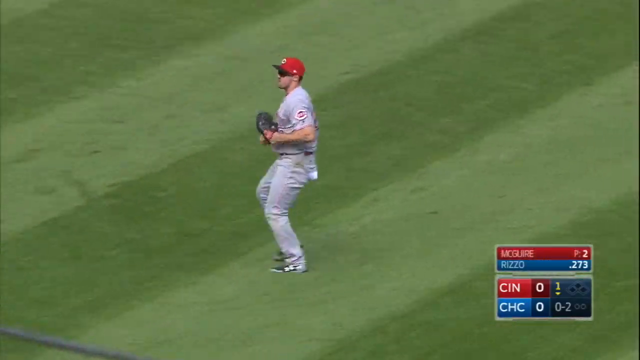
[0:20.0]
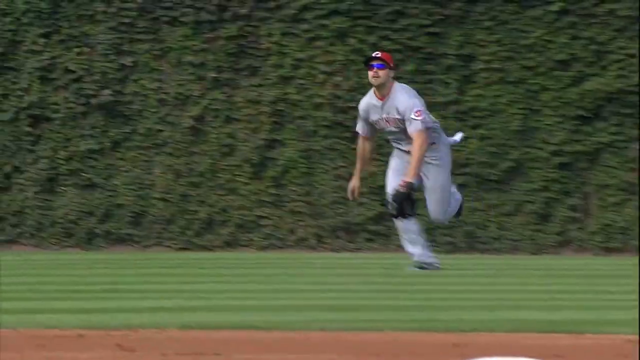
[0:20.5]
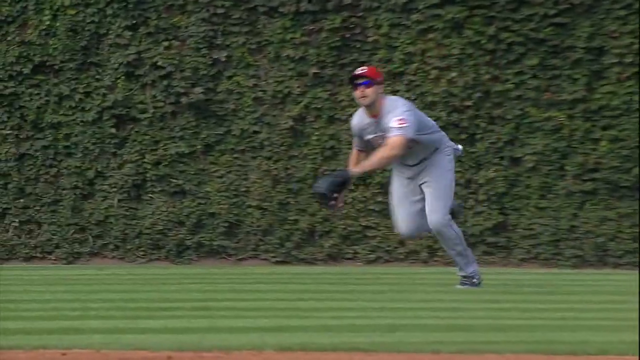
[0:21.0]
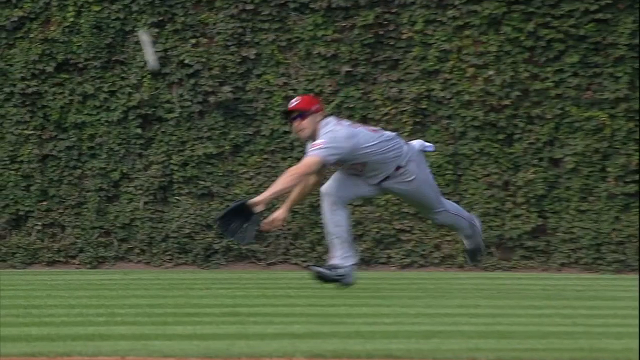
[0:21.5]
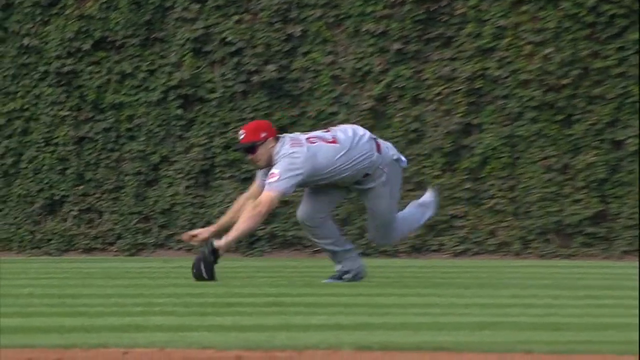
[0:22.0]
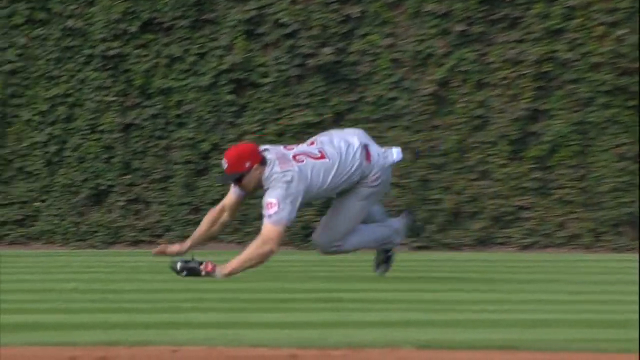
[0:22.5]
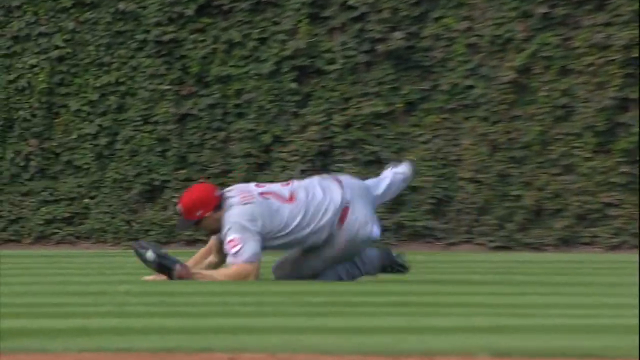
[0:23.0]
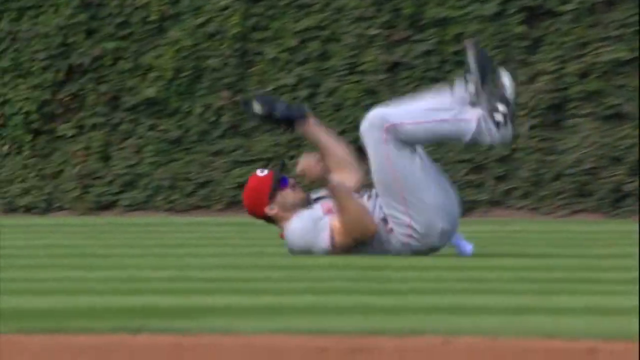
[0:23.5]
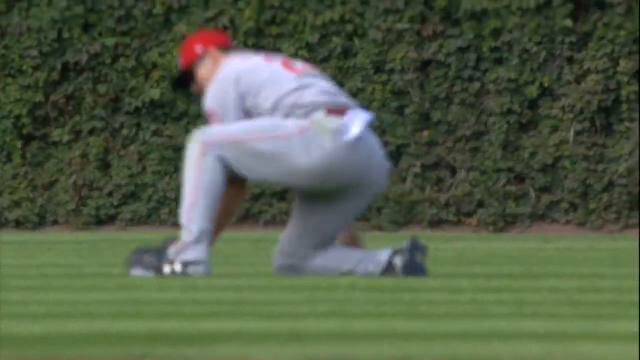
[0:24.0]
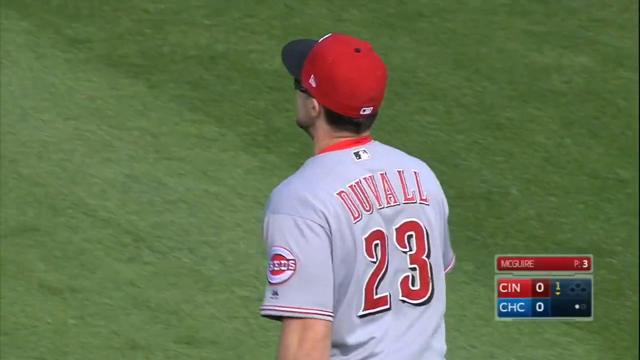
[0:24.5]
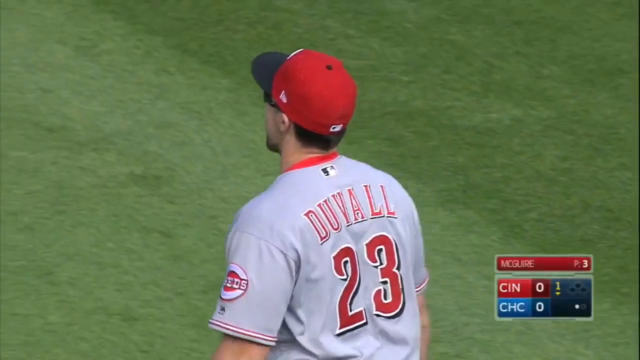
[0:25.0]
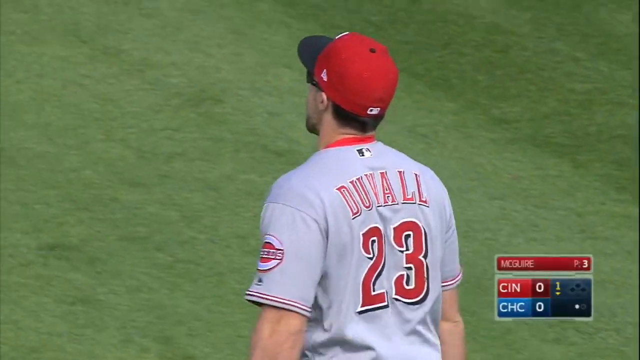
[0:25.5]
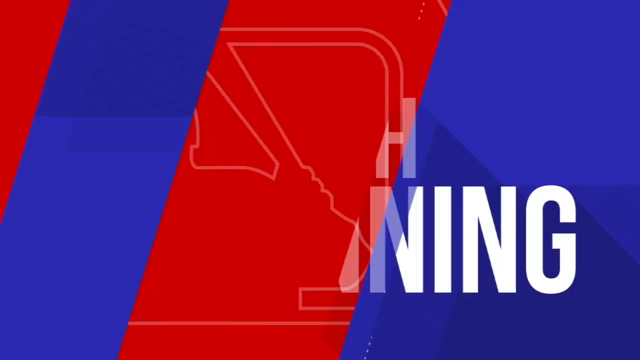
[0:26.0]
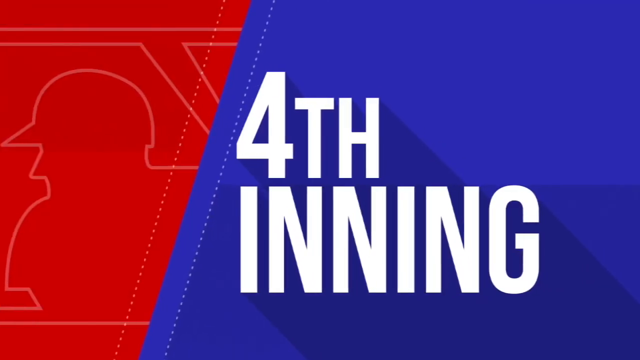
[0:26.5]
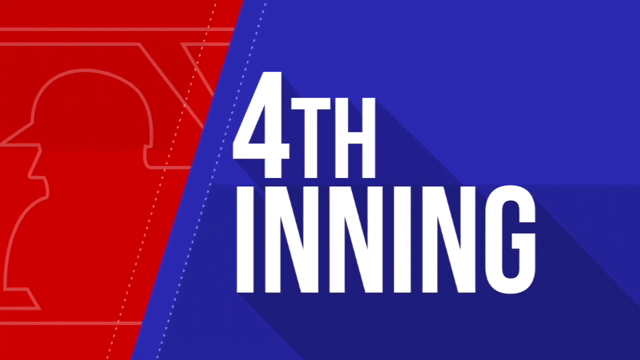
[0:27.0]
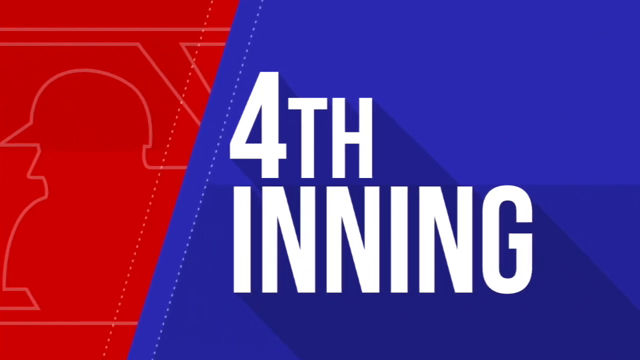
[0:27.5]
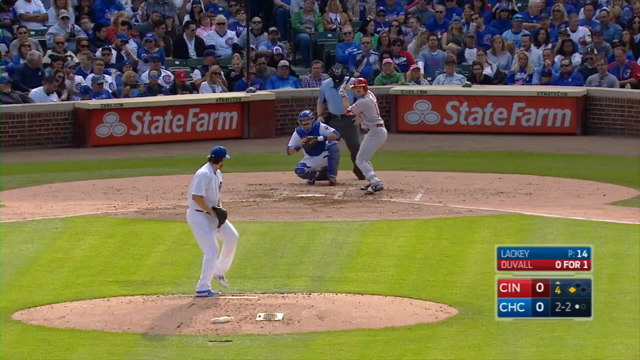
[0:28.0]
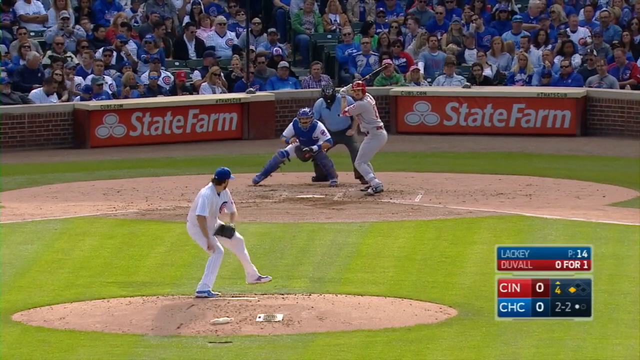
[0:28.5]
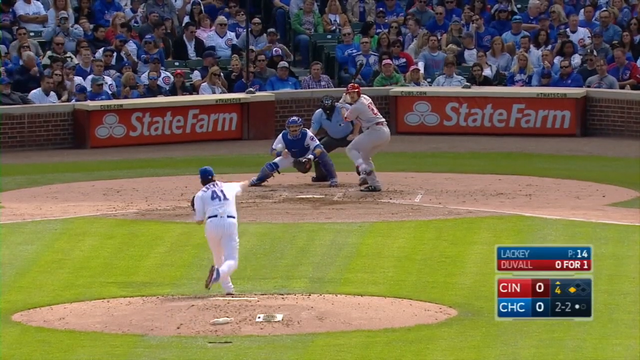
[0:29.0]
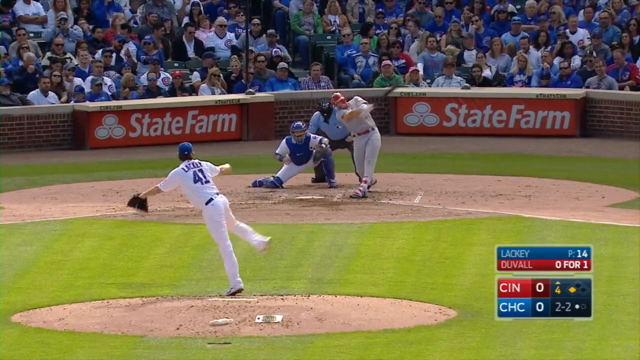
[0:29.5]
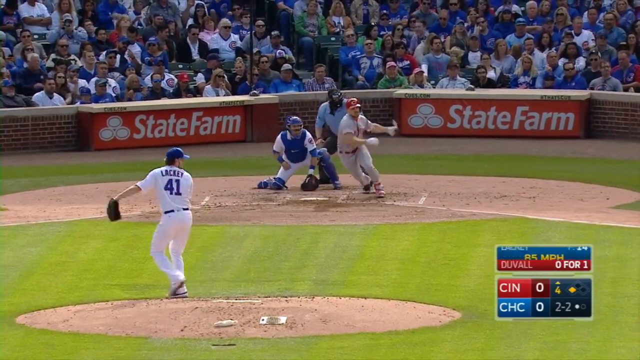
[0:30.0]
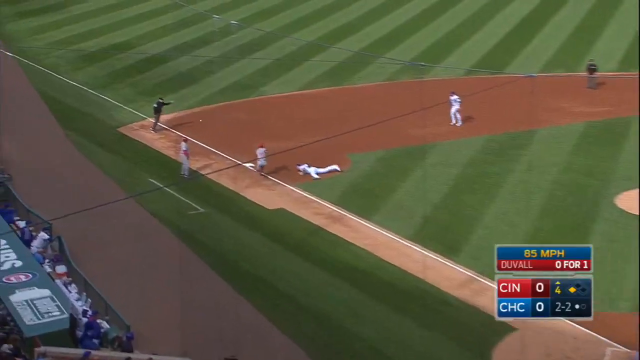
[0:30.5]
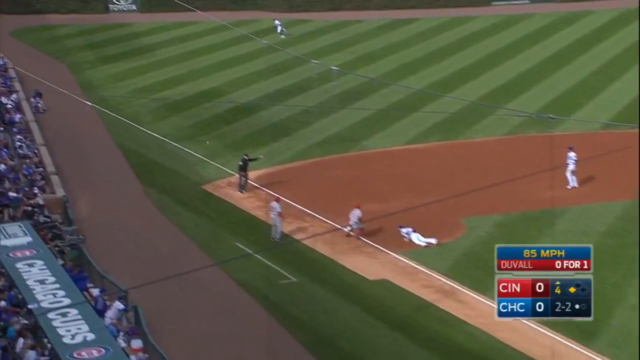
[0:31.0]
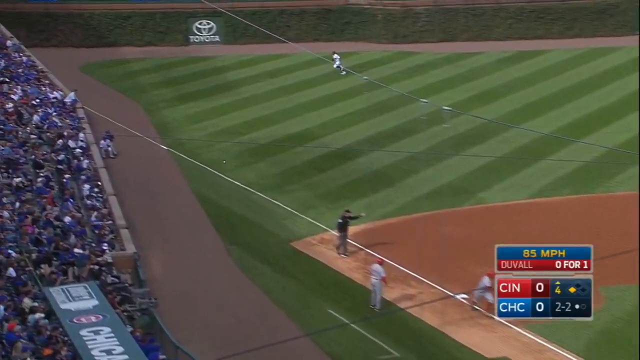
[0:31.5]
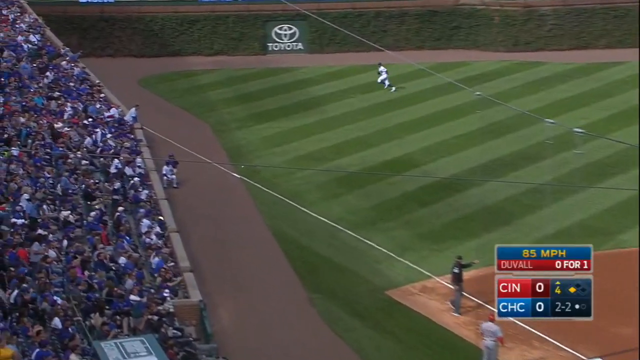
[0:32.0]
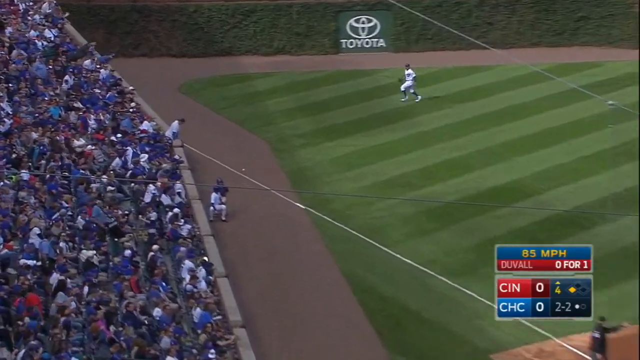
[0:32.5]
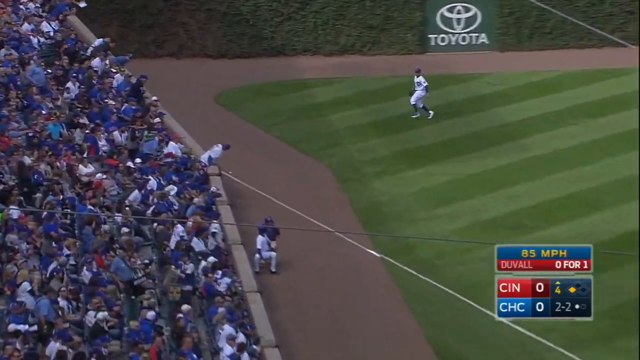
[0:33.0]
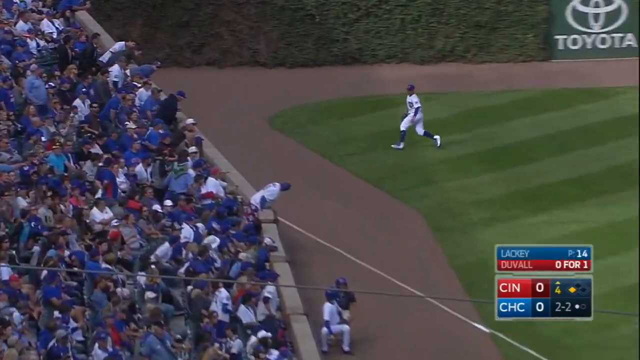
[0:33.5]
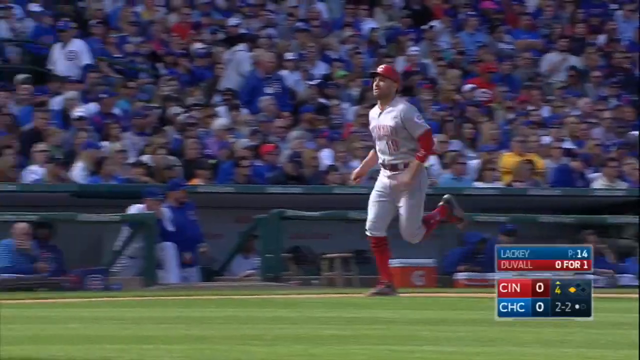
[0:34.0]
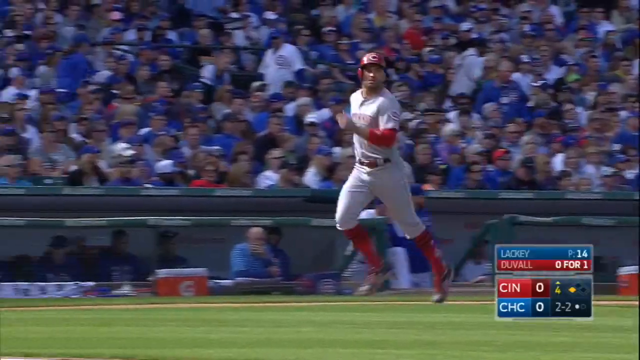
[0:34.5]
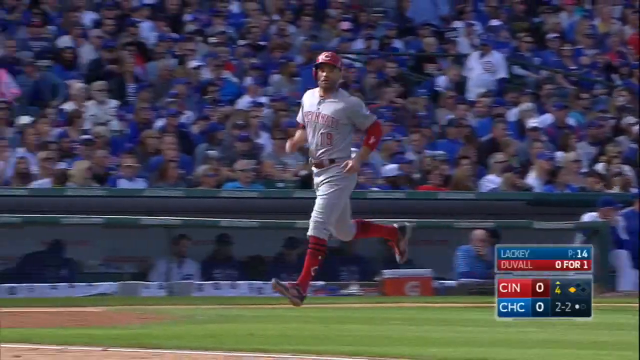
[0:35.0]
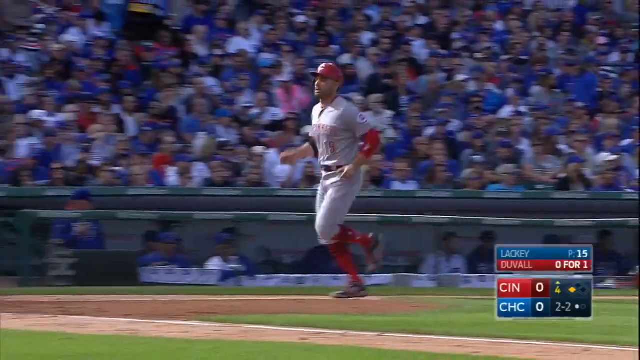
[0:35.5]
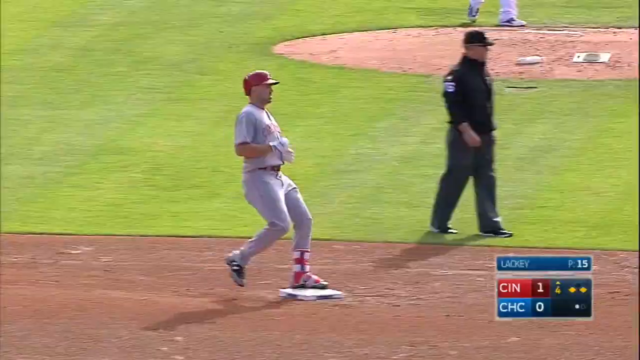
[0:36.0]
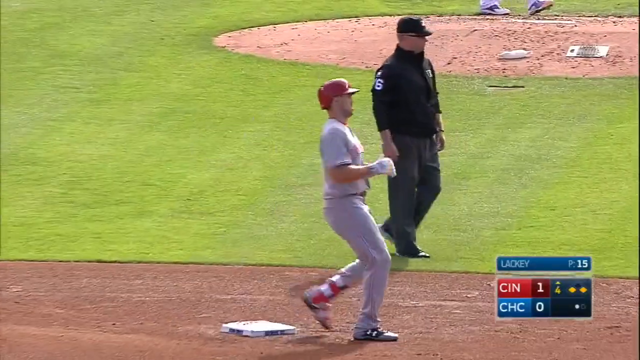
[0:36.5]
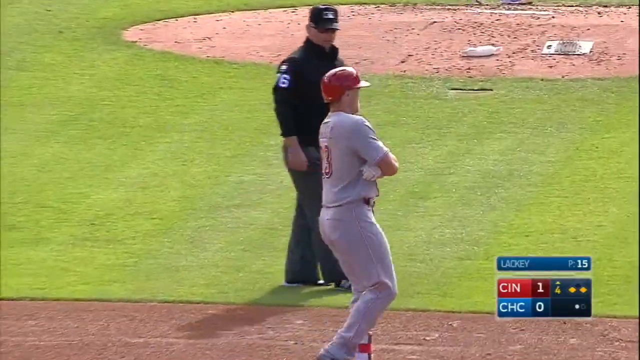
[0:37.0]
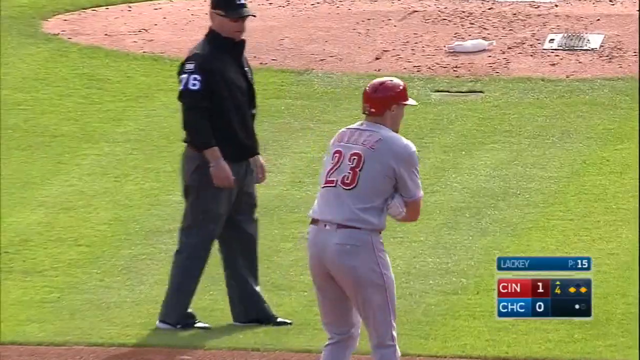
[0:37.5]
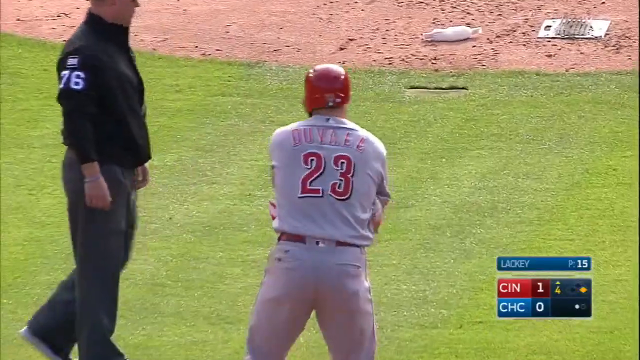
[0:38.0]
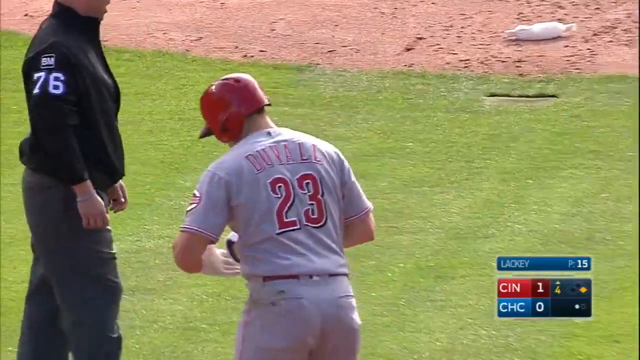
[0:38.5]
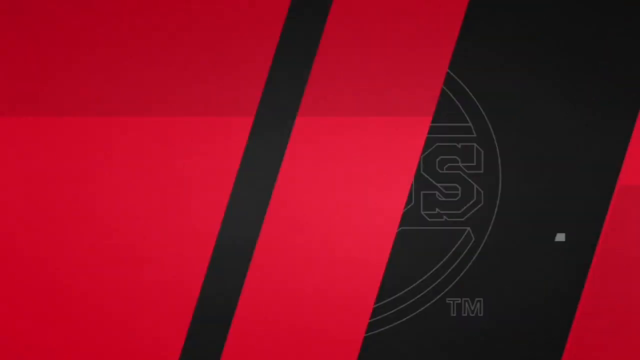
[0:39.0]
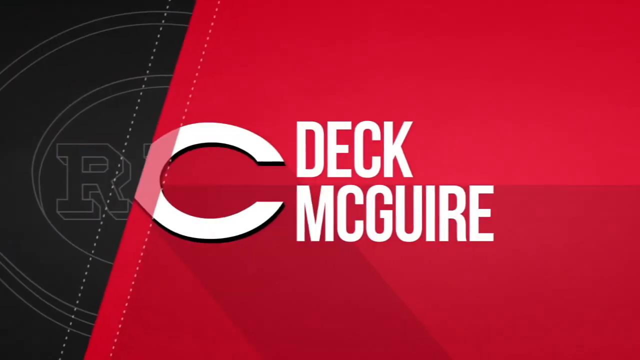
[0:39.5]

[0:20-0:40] A highlight of a single player begins. The playing area covers about the bottom quarter of the frame, and beyond its edge the perimeter of the baseball field is covered in leaves and foliage. A fielder, right leg bent forward and left leg trailing behind, stretches out both arms, his left arm turned so that his catcher's mitt is ready for the ball. Leaning forward and sprawling, he catches the ball at ground level, turns over on his side as he hits the ground, and gets straight to his feet in a relatively fluid movement. In a separate scene, a batter hits the ball toward the advertising boards; he has not made great contact, so the ball rolls along the ground, but he is able to run to base.